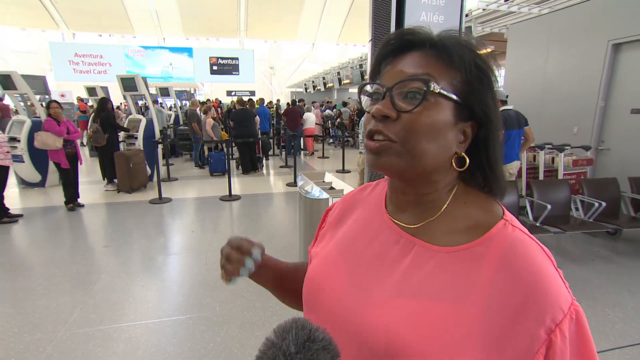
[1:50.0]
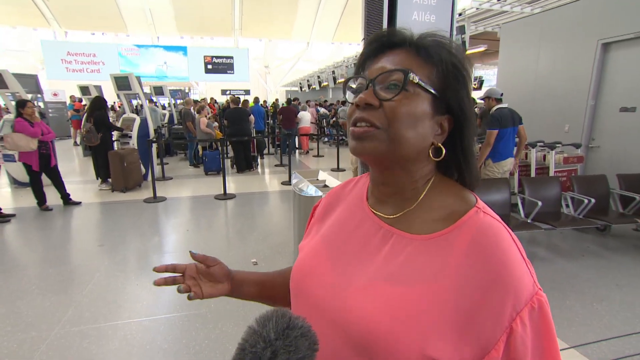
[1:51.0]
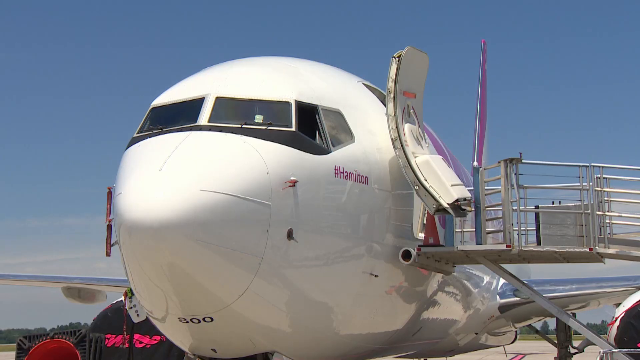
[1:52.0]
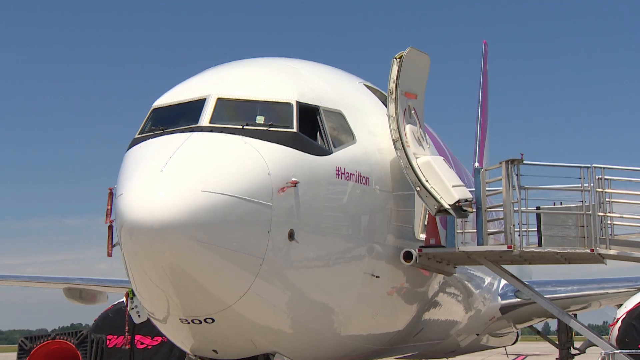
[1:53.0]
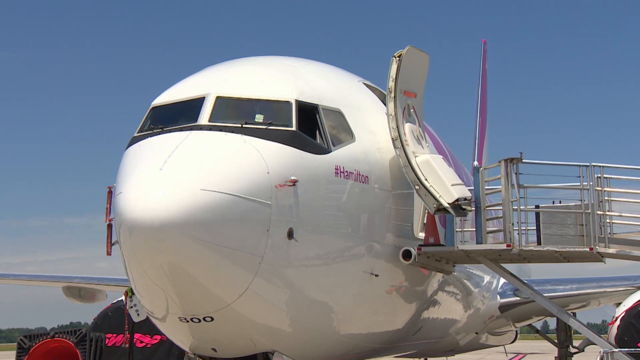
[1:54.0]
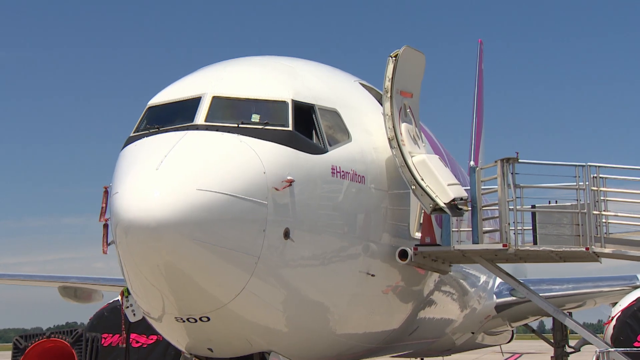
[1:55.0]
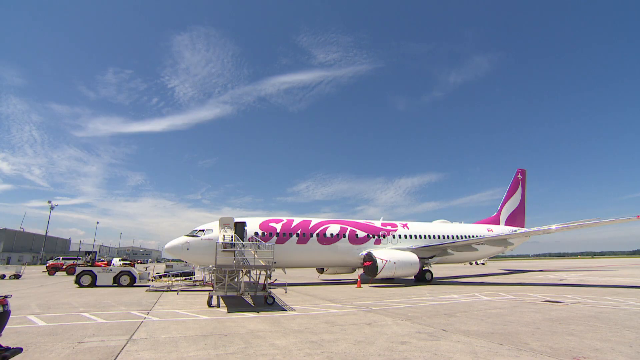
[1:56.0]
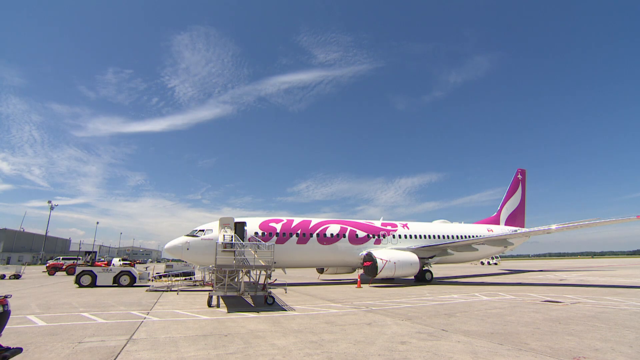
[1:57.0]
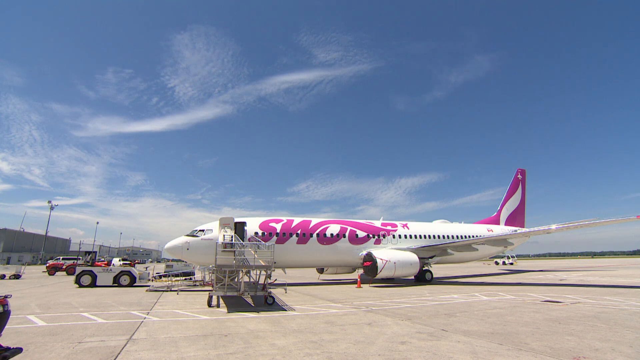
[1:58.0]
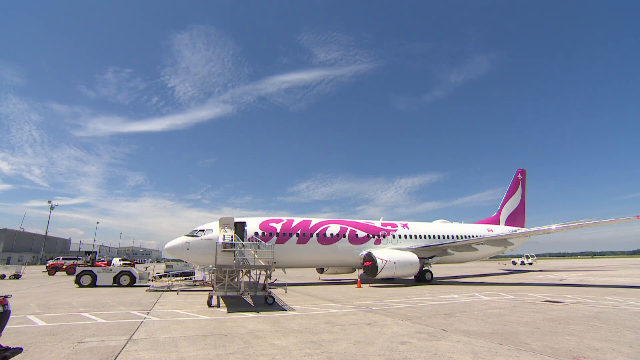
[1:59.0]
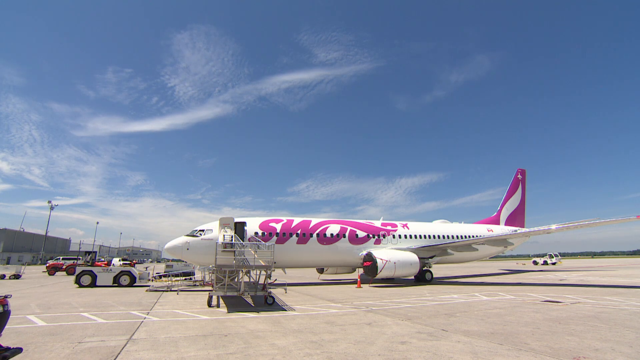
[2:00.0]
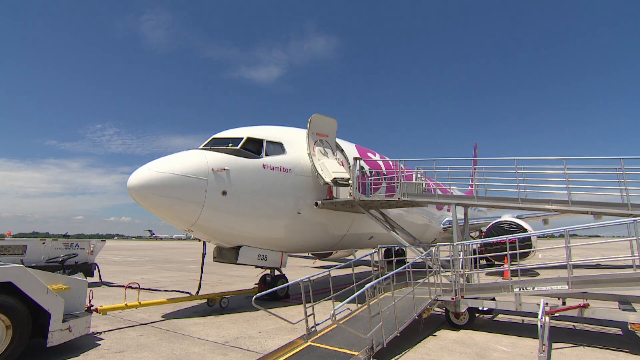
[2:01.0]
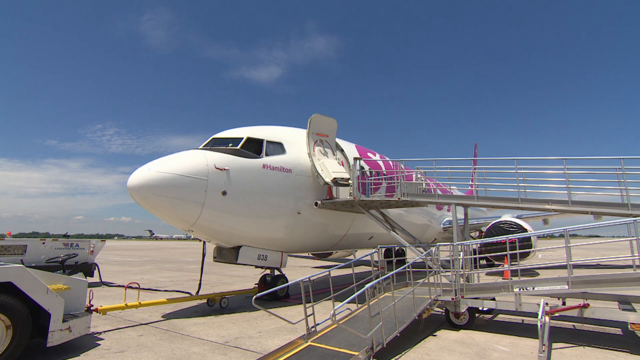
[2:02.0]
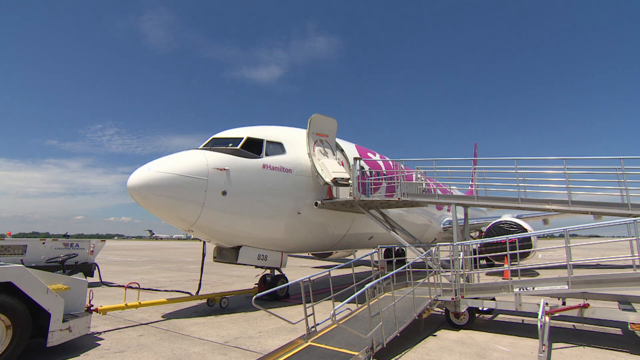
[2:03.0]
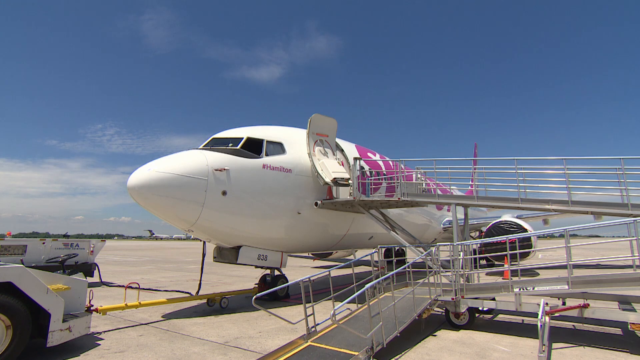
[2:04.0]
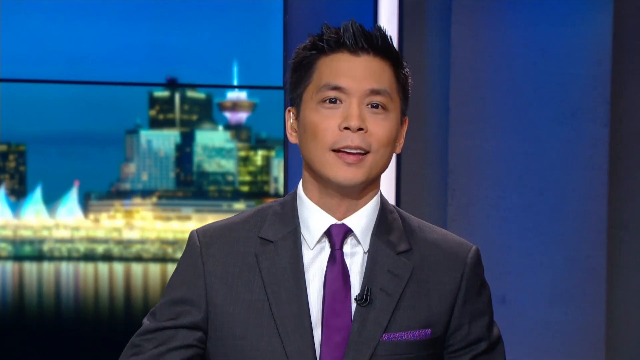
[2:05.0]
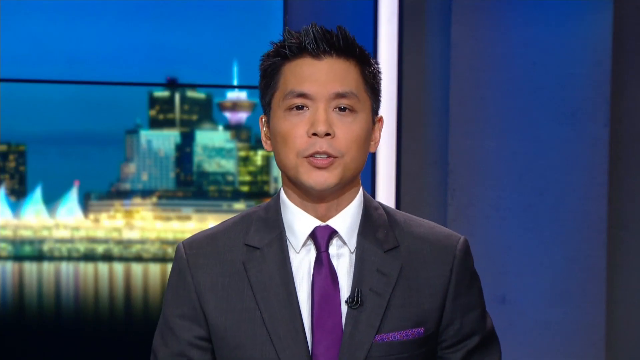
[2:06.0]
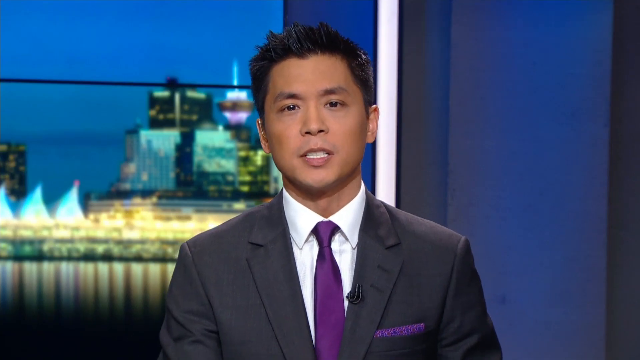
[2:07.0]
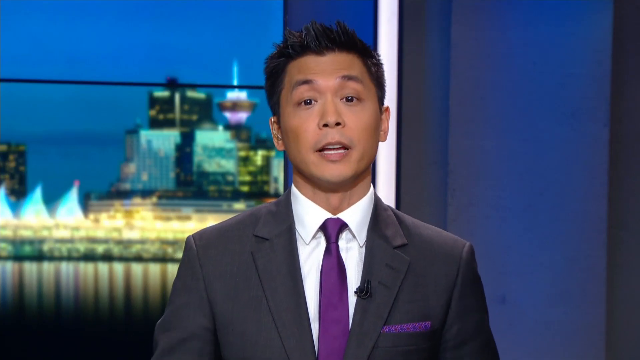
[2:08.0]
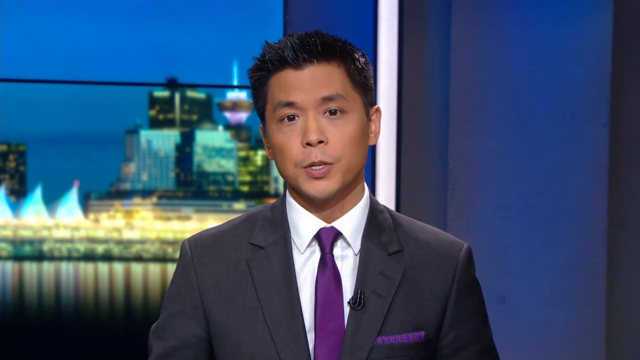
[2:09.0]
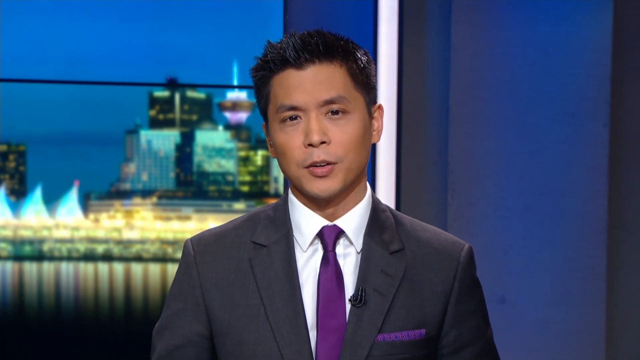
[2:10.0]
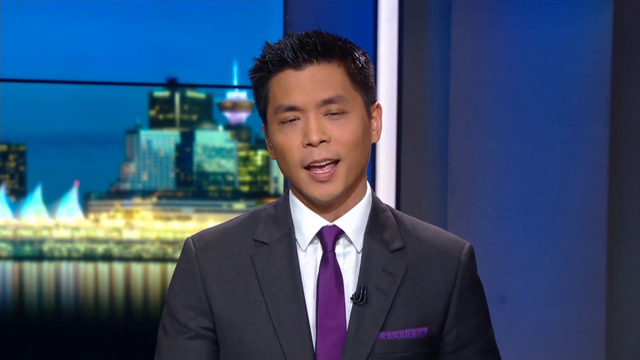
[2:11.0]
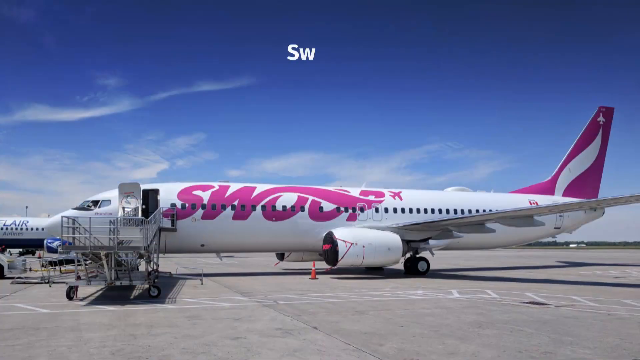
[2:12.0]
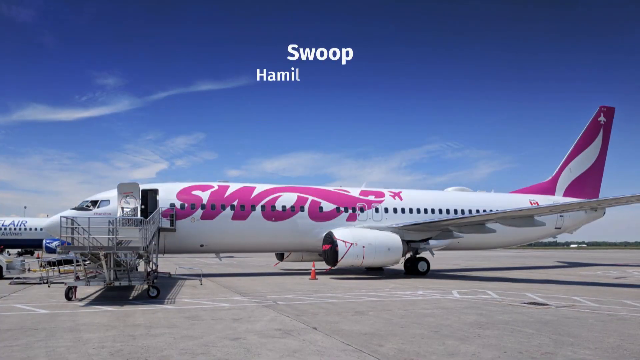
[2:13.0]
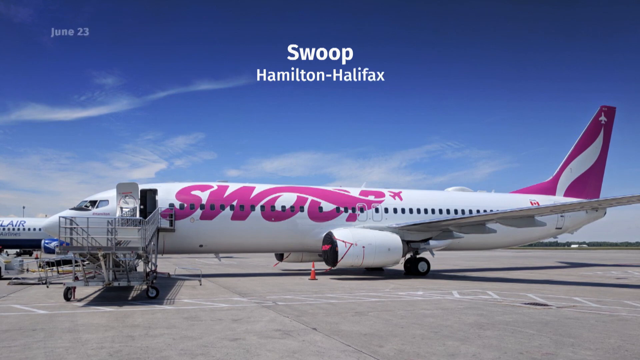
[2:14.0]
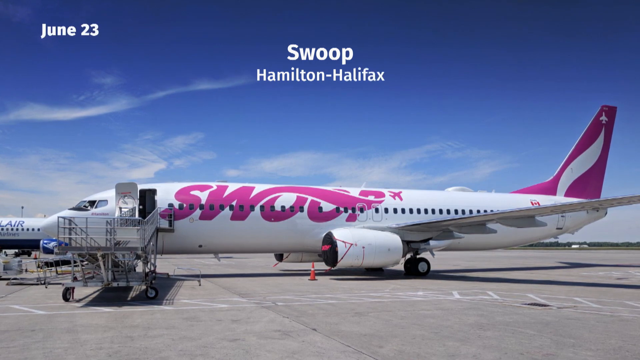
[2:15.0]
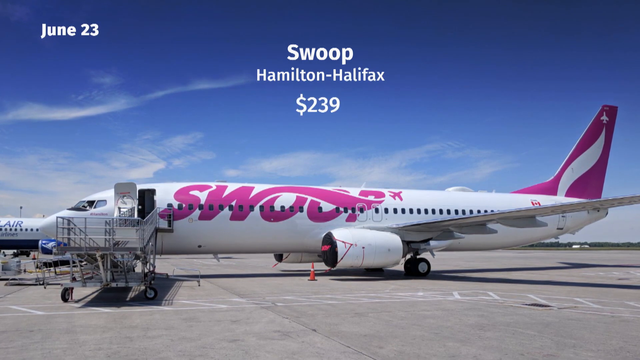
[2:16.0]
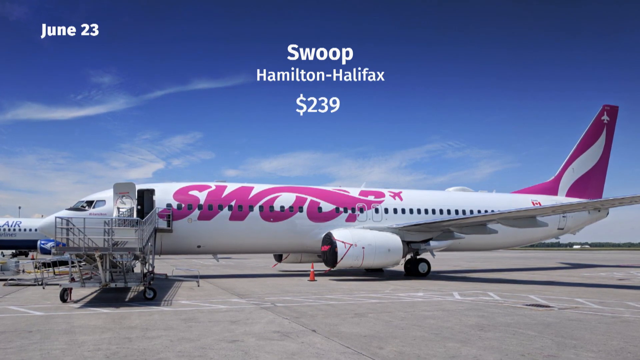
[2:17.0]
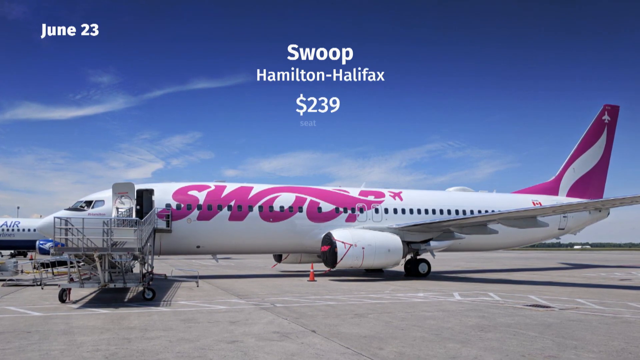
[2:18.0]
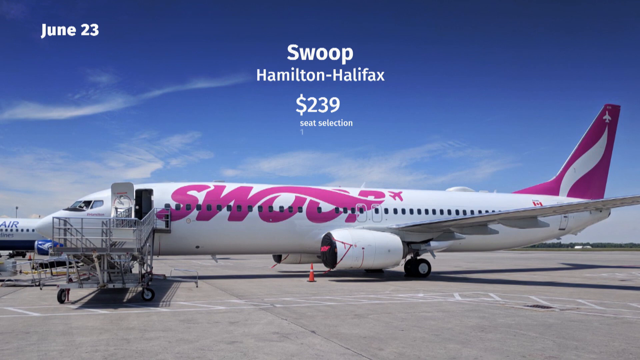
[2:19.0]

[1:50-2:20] The woman talks toward an interviewer. Behind her, multiple lines of people lead up to desks and kiosks in a busy, quite crowded airport, with many people carrying various kinds of suitcases and backpacks. There is also a seating area behind her with multiple chairs with armrests. She moves her right hand expressively, holding it palm up toward the ceiling. The video then cuts to the front of an airplane, where pink text on the nose reads "#Hamilton". One of the cockpit windows is open, and the door is also open, with a large passenger walkway leading up to it. A side view of the same airplane follows, showing the empty passenger walkway, a small cart attached to the airplane's nose, and pink branding text on the side reading "swoop". The tail is the same color as the pink text. The airplane is parked on a tarmac. The camera then zooms in to a front side view of the nose.